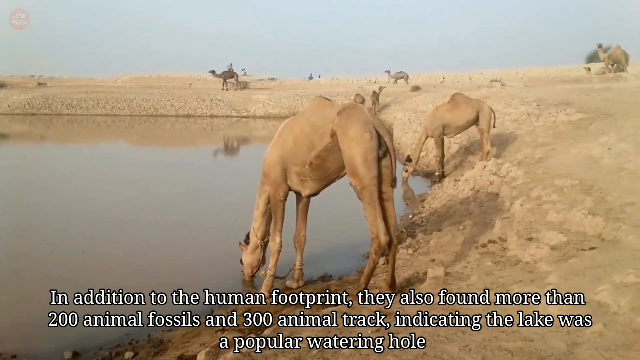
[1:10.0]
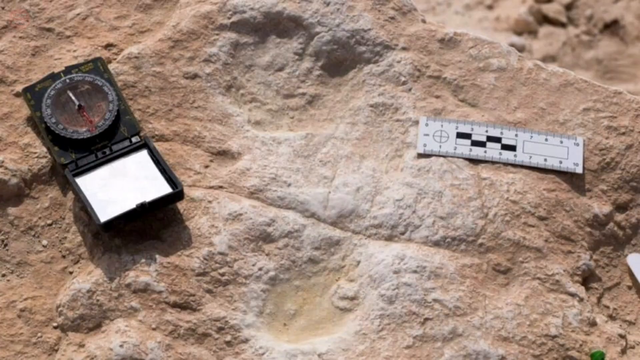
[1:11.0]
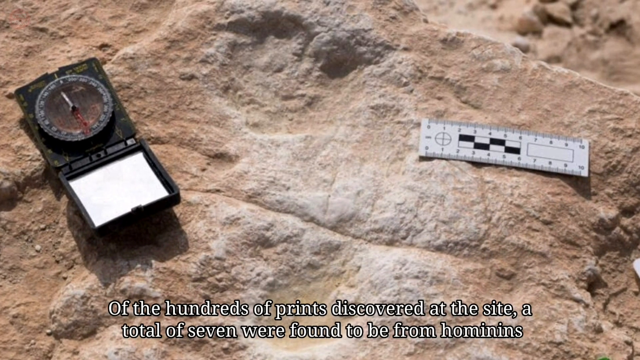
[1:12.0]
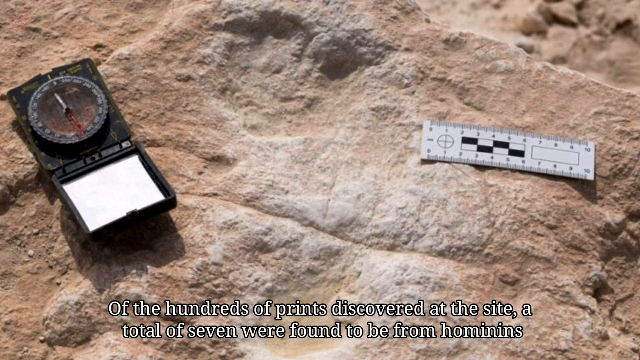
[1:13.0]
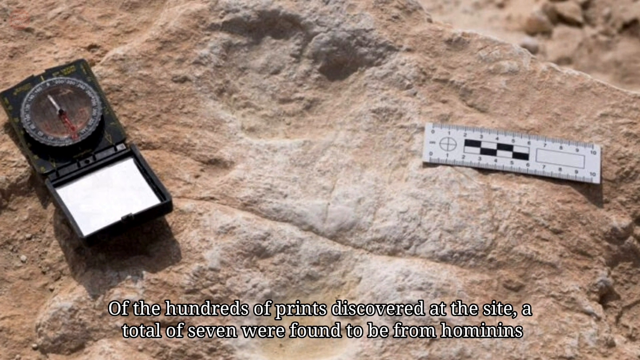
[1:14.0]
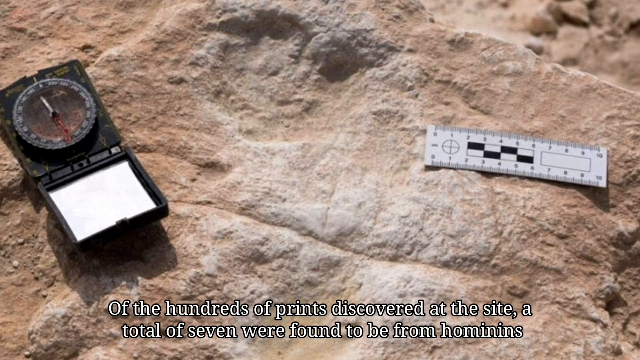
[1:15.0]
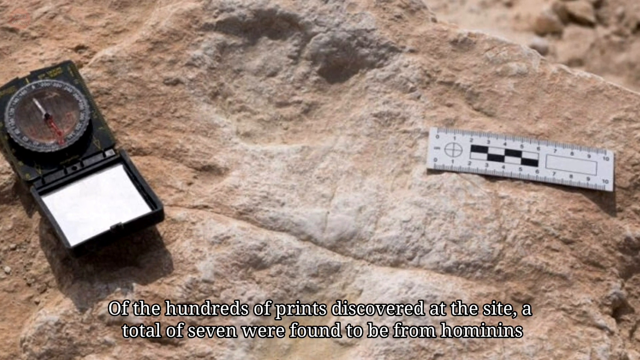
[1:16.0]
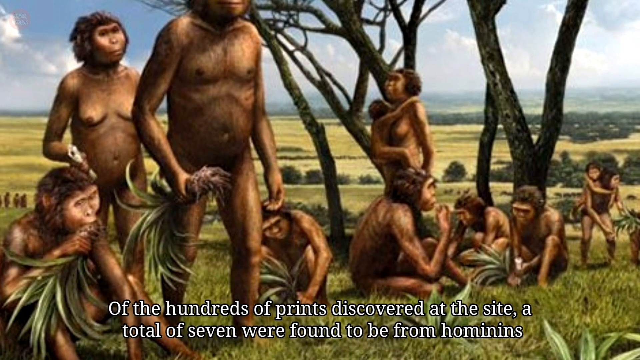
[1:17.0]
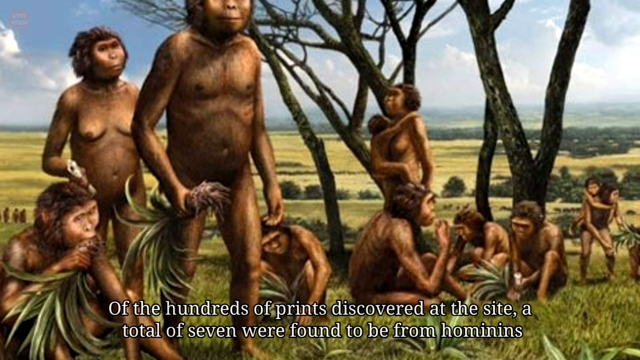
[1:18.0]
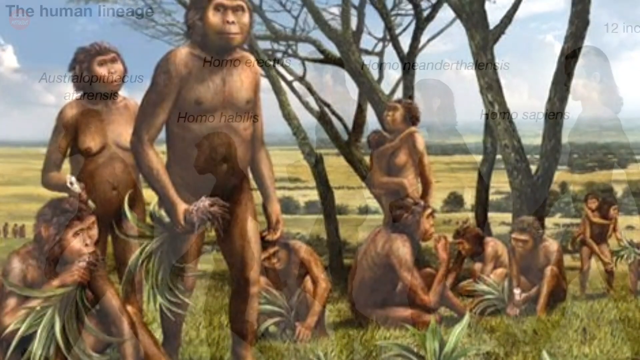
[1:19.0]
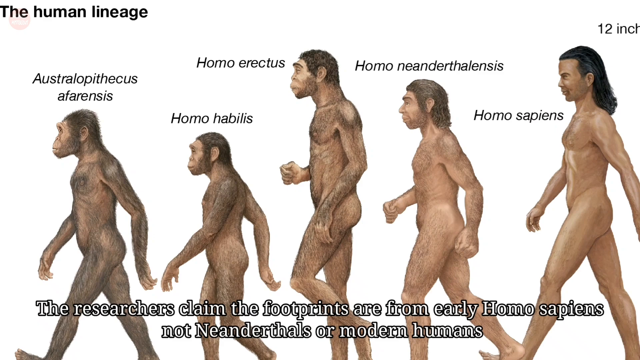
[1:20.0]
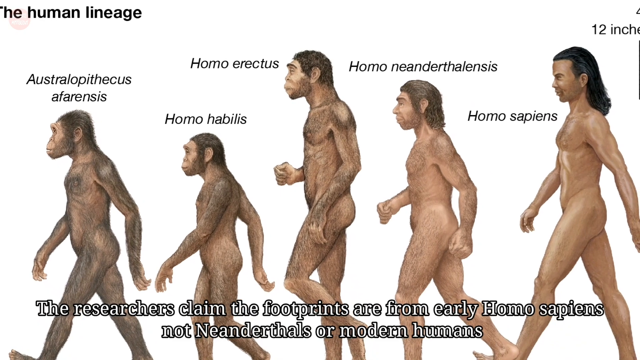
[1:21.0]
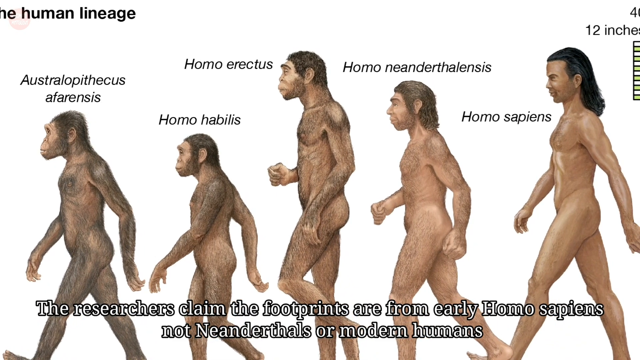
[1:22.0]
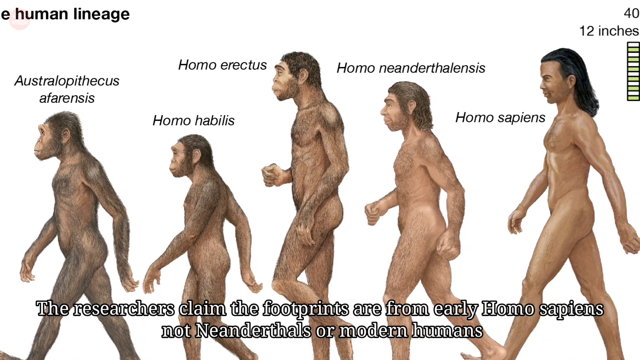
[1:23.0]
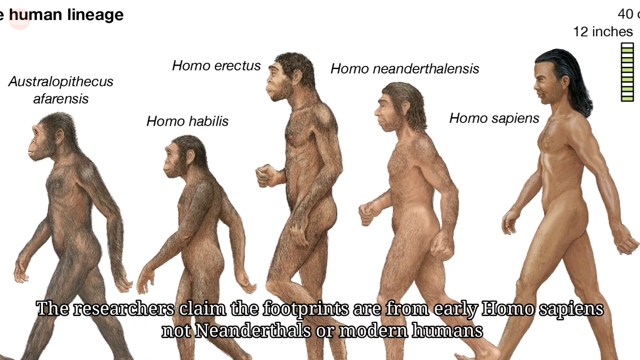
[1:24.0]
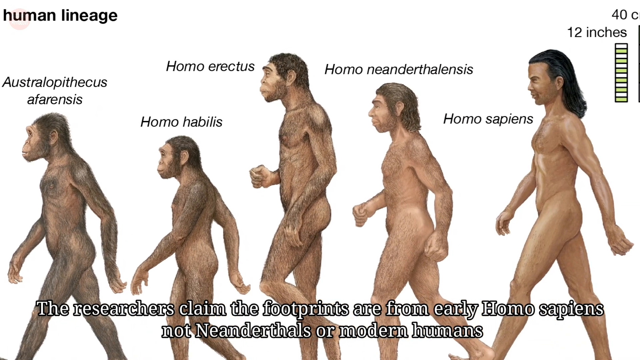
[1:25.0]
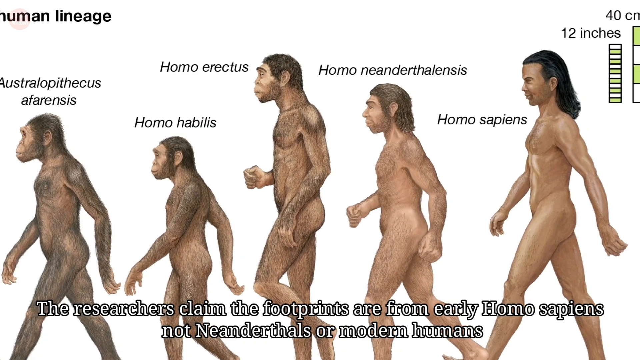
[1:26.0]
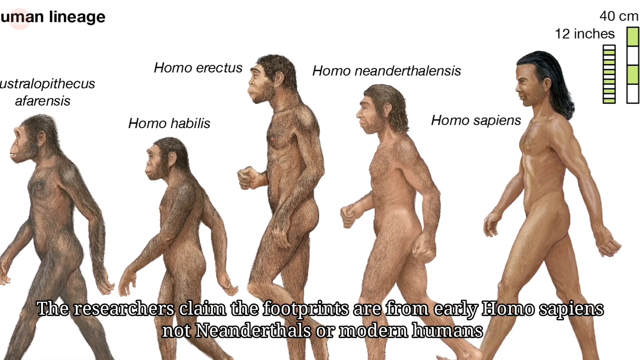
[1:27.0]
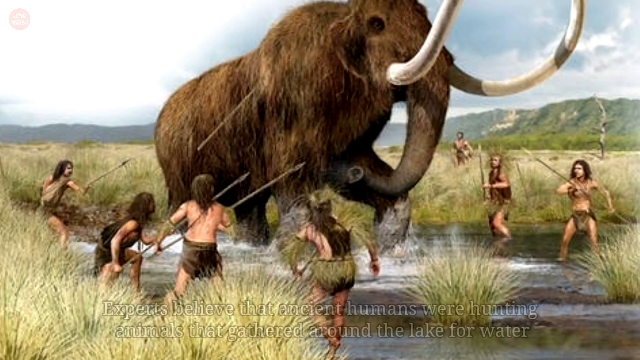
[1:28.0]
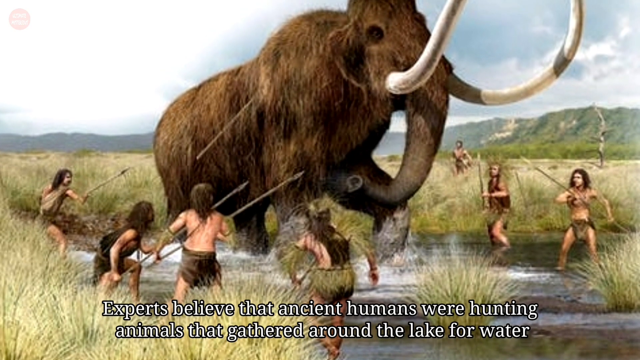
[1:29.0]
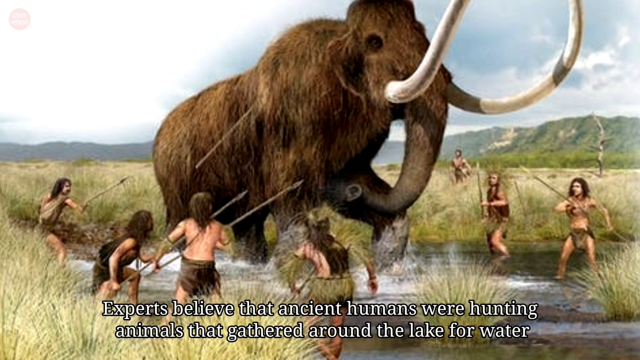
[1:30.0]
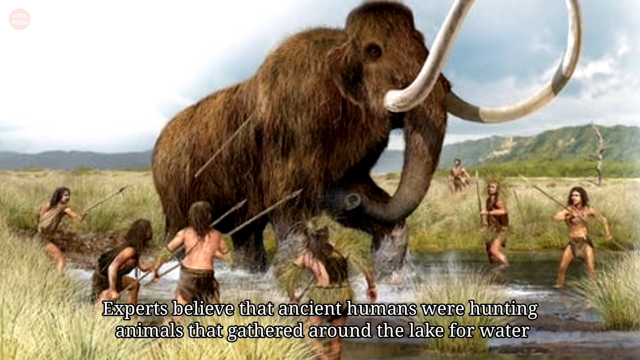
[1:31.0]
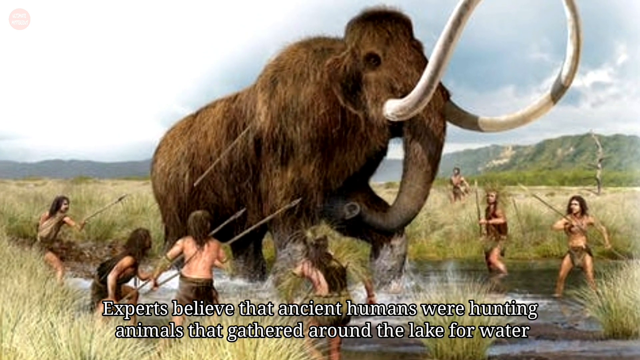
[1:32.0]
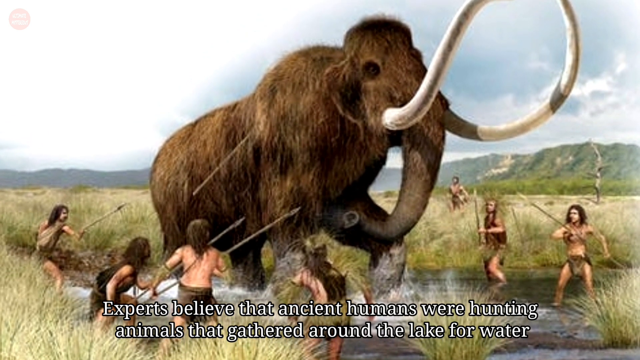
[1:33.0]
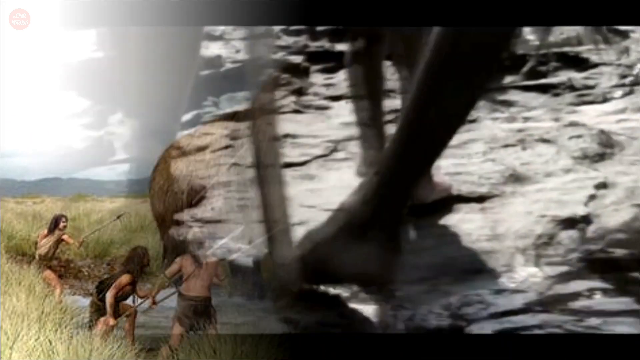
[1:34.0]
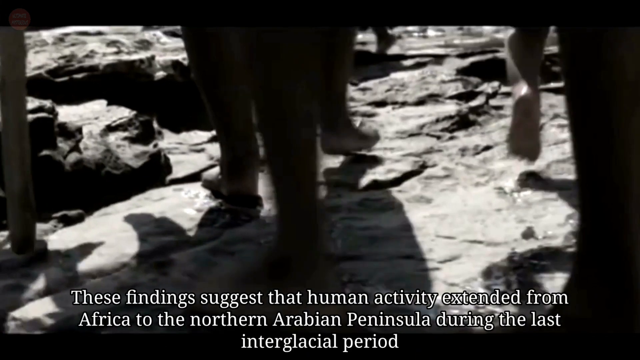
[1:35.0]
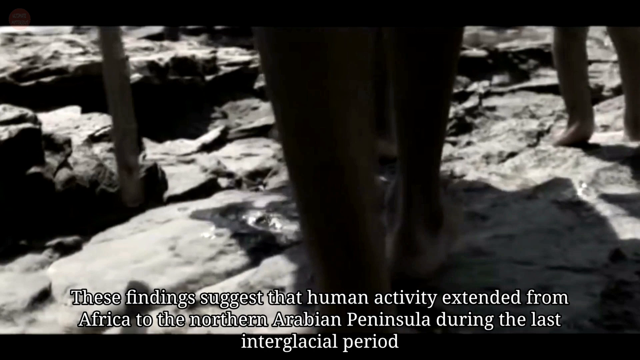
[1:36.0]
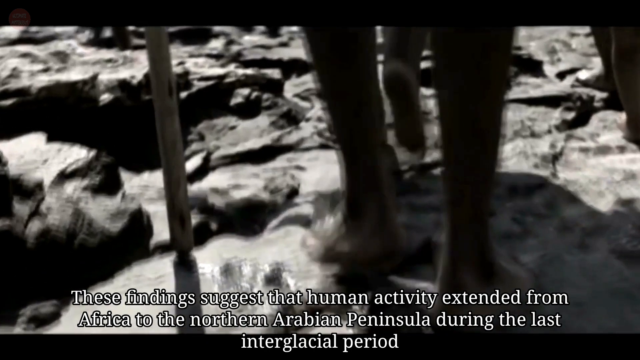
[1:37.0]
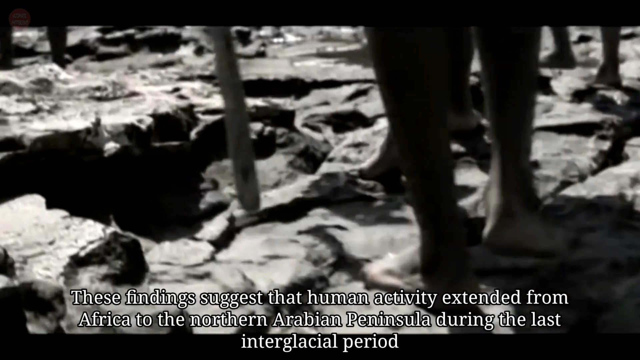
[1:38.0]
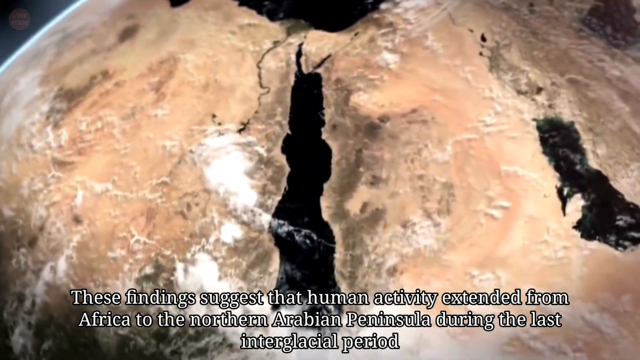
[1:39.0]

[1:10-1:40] A still image of a print that is thought to be human, shown with some instruments, is panned across. Different renderings follow of ancient humans and how they might have looked. Then come drawings of prehistoric life, such as a woolly mammoth being hunted. The drawings appear to be done in colored pencil or something similar and show early humans in a progression from Australopithecus to Homo sapiens, illustrating how they changed physically over time. Quick snippets of imagined events include people walking on the rocks in the area. A spinning globe without arrows turns in the general direction humans might have traveled, from Africa over to Asia, past Saudi Arabia.